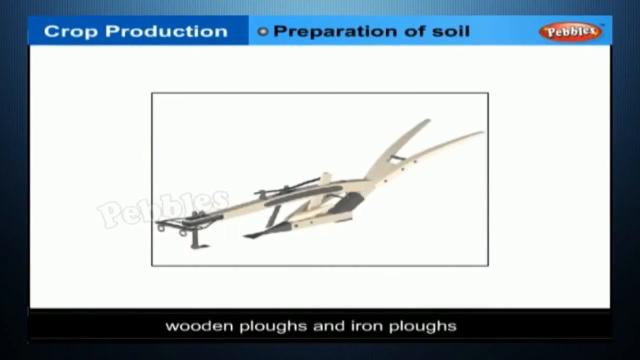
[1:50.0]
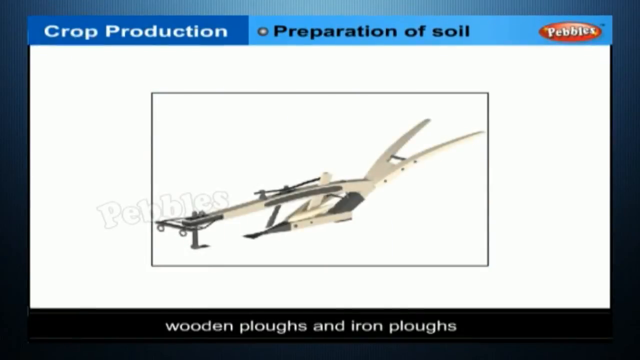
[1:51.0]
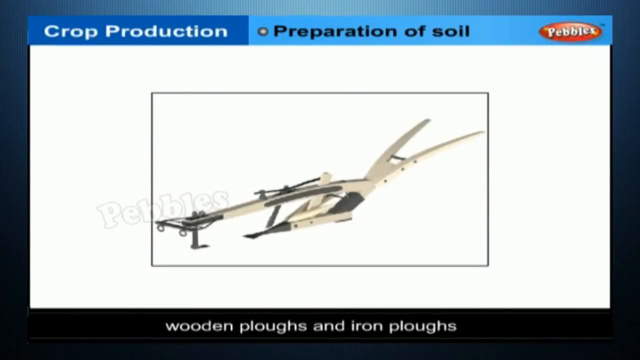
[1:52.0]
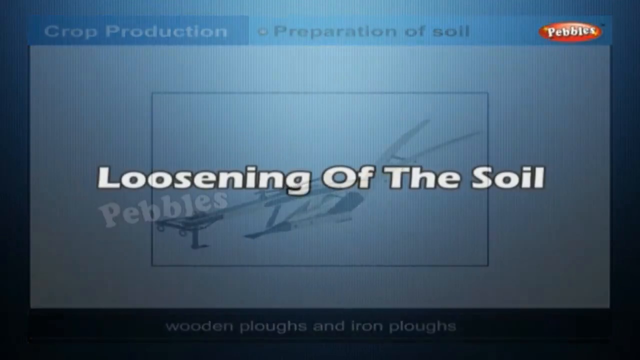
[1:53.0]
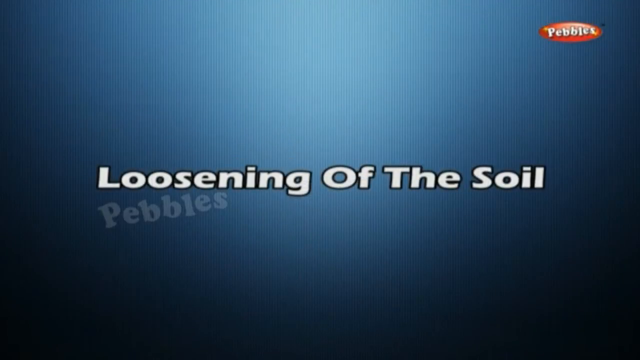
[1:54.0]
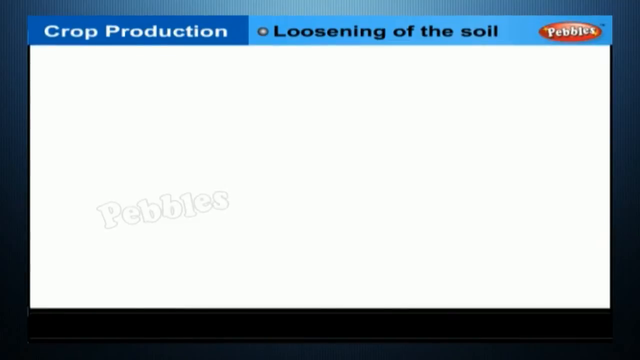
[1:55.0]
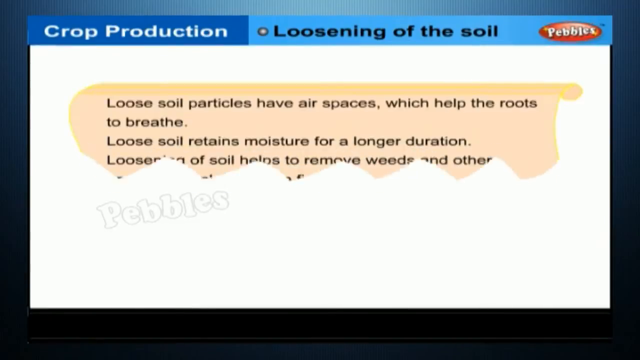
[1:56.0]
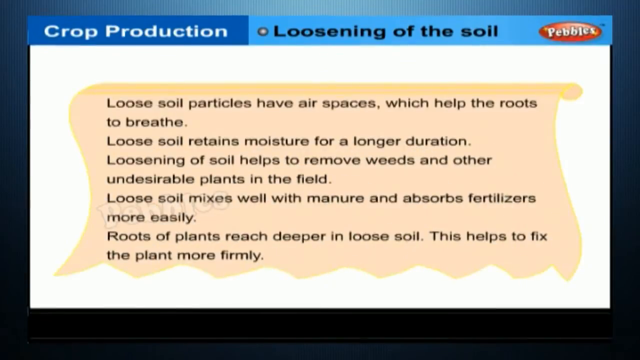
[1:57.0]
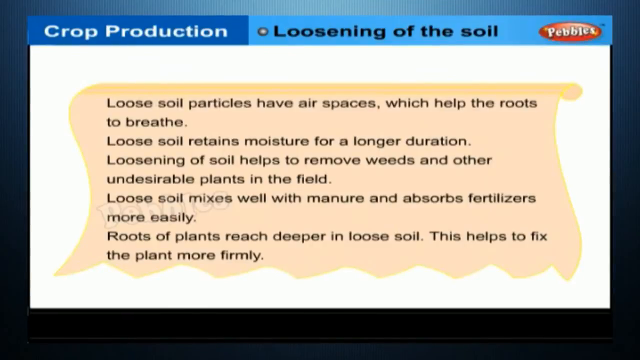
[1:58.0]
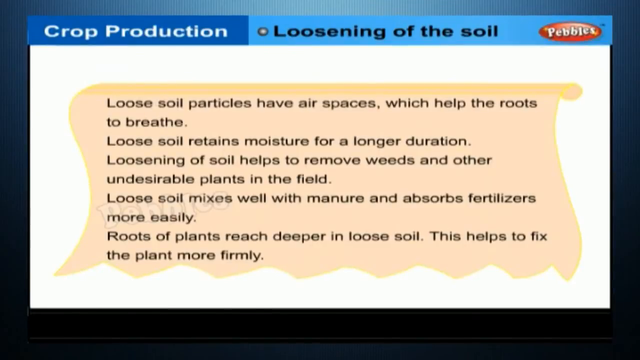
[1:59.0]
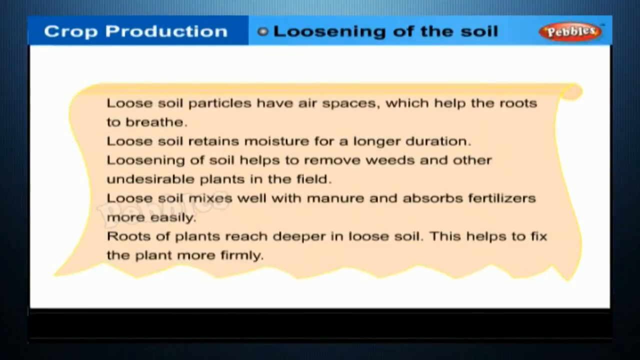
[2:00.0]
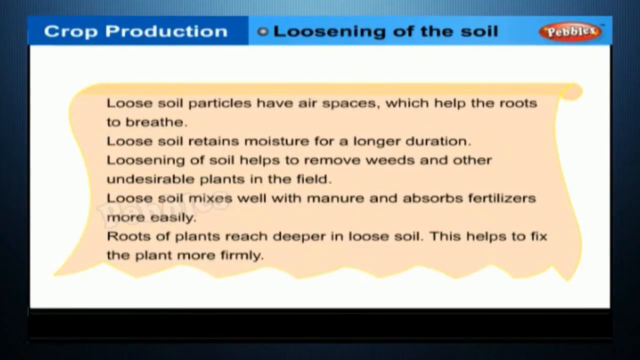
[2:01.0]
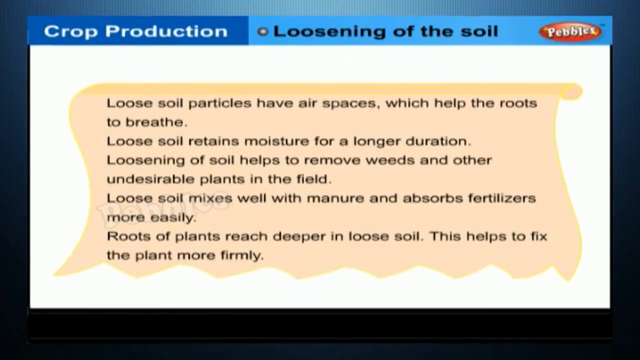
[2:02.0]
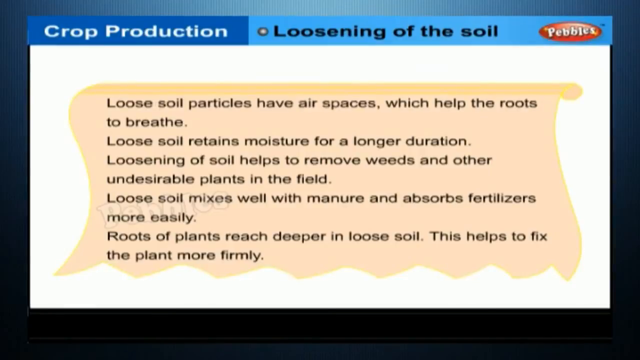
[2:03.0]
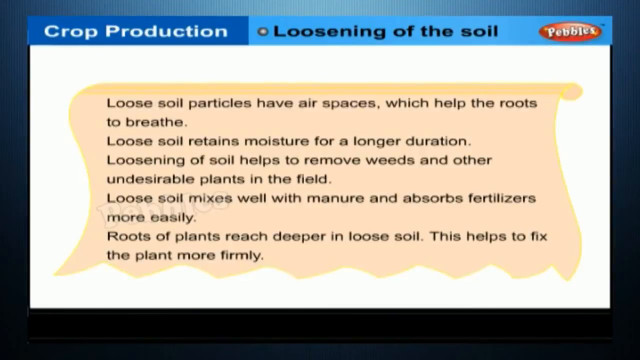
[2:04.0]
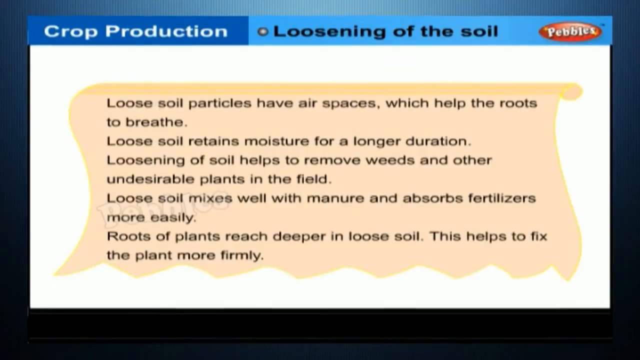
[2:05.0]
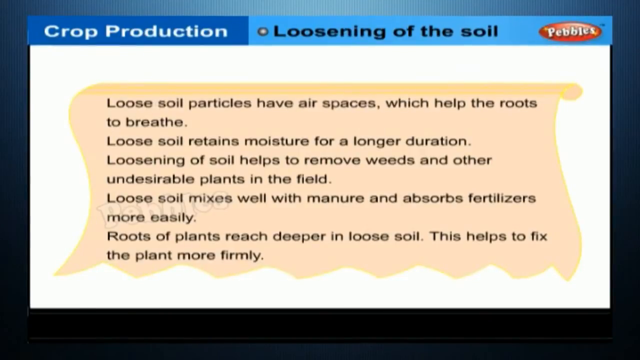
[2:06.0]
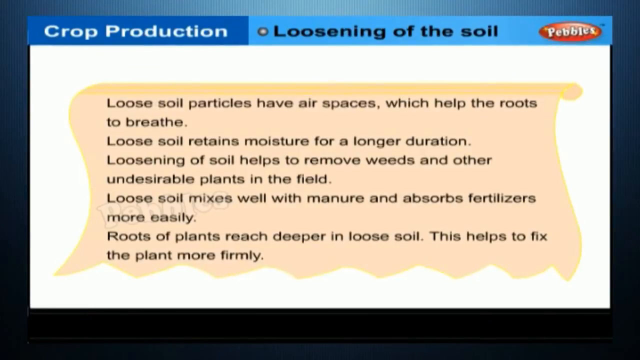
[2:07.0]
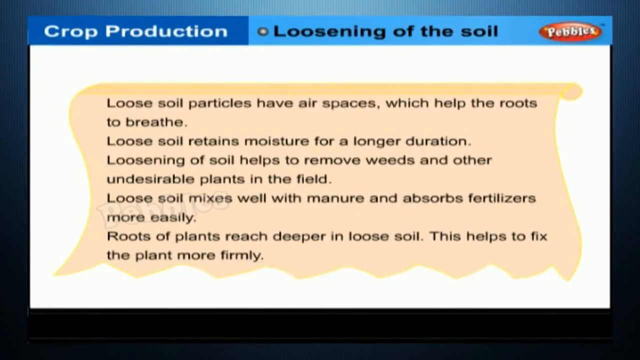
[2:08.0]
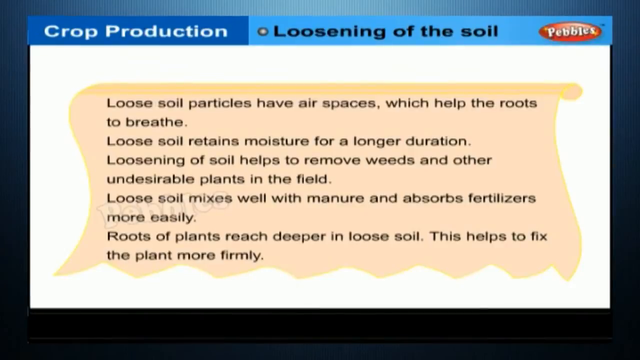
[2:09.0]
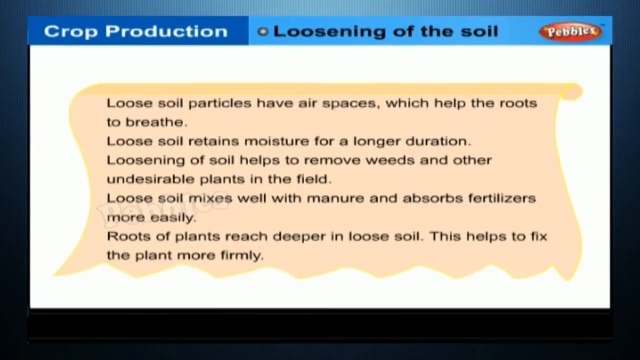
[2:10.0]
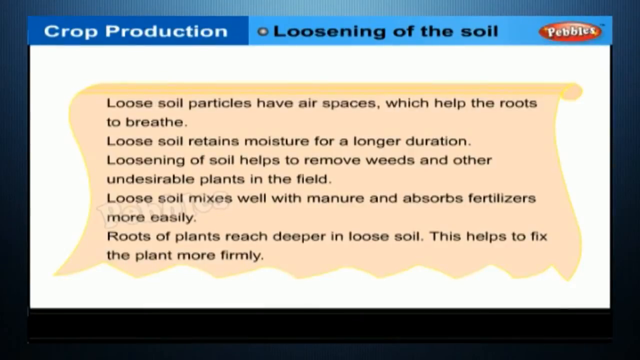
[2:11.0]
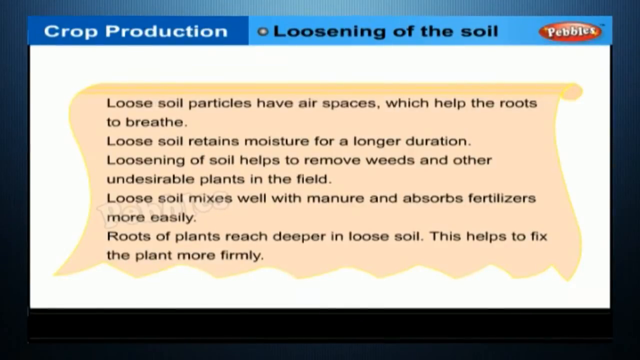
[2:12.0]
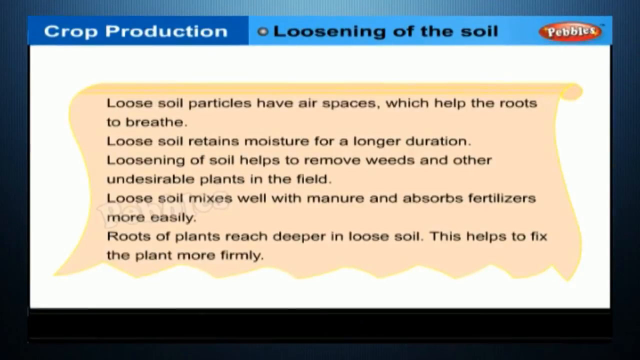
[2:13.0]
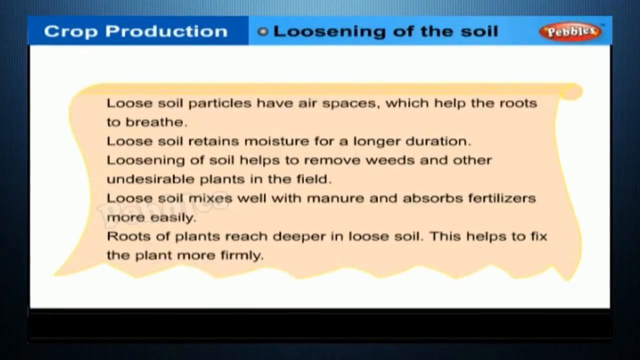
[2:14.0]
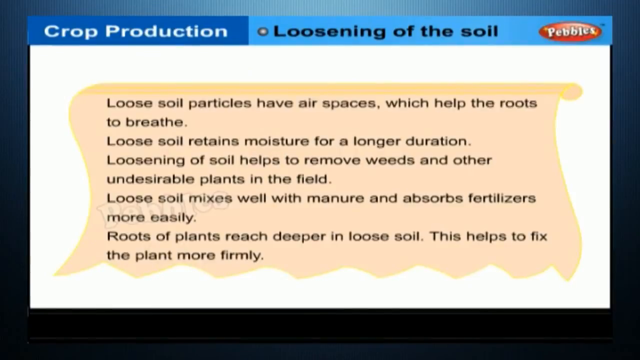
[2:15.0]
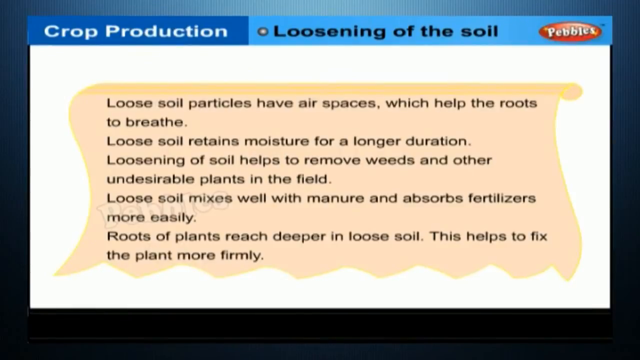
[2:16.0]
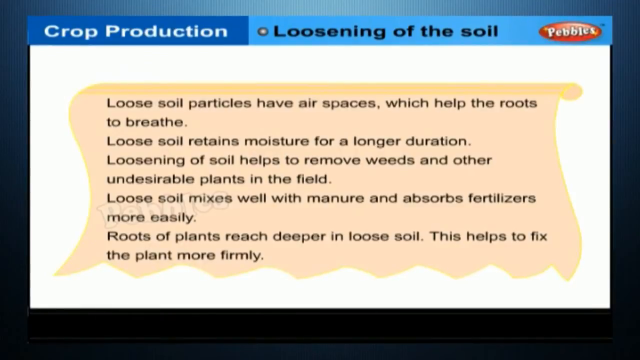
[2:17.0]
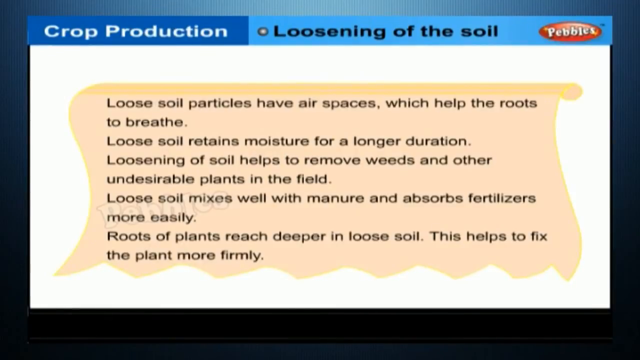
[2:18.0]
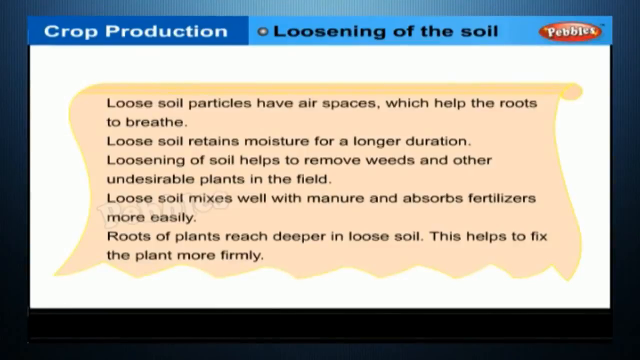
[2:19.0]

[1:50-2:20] In the preparation of soil section, a wooden plough appears after the image of a tractor pulling a metal plough; the wooden plough is shown by itself on a plain background. The image changes to a title on a blue background reading "loosening of the soil". An information page follows: on a white background, the information is on a peach or pale pink coloured scroll shape with a fluted or wave effect at the bottom. It reads "Loose soil particles have air spaces which help the roots to breathe. Loose soil retains moisture for a longer duration. Loosening of soil helps to remove weeds and other undesirable plants in the field. Loose soil mixes well with manure and absorbs fertilizer more easily. Roots of plants reach deeper in loose soil. This helps to fix the plant more firmly."